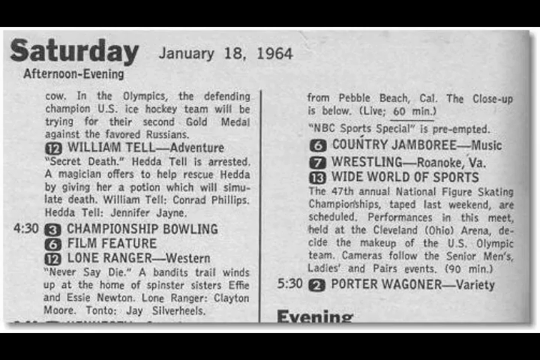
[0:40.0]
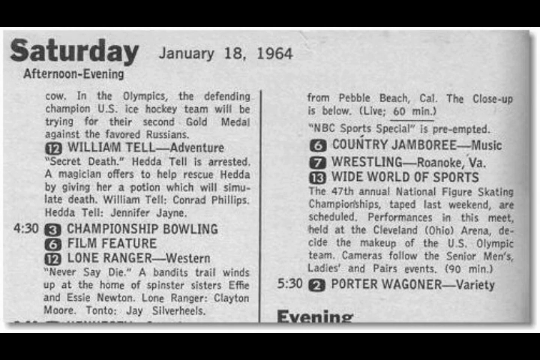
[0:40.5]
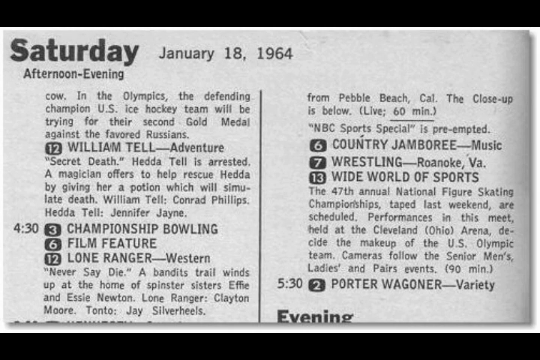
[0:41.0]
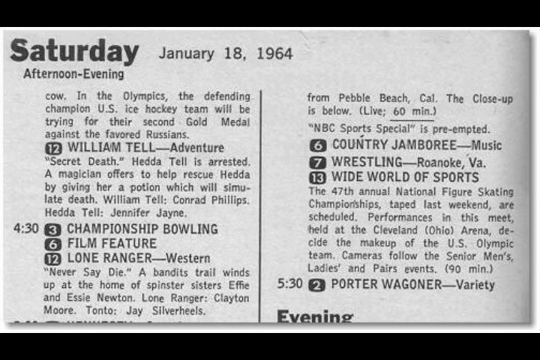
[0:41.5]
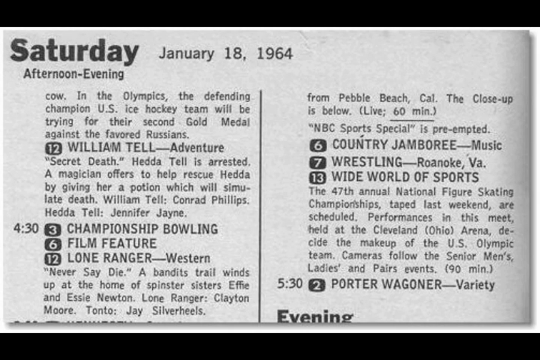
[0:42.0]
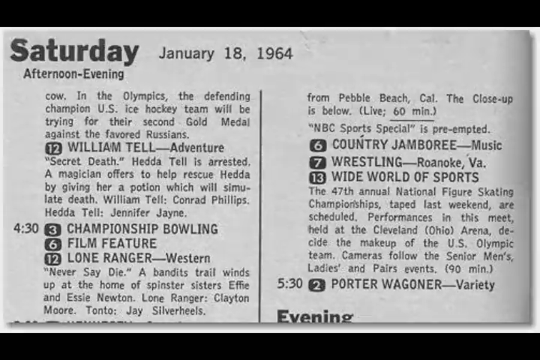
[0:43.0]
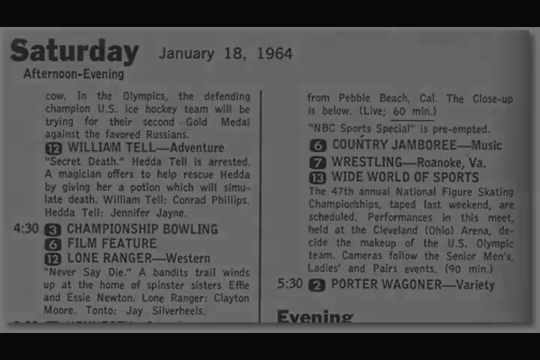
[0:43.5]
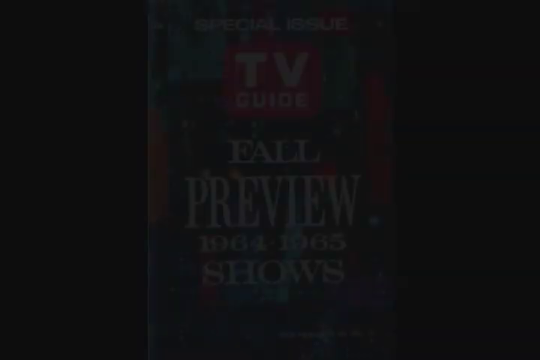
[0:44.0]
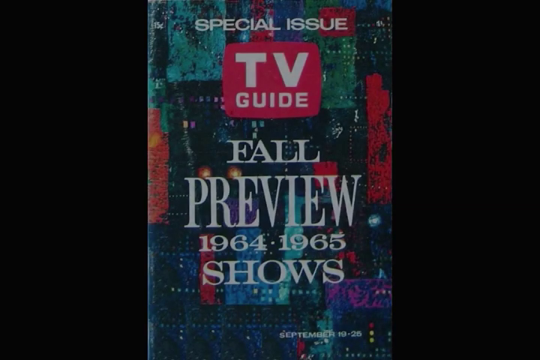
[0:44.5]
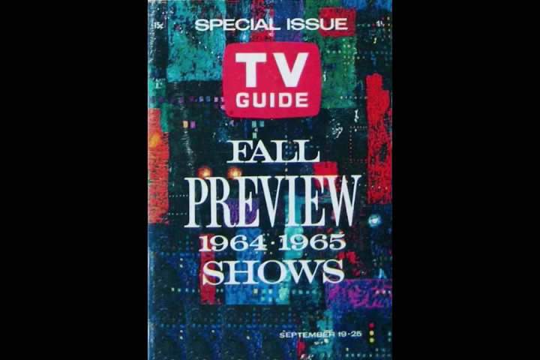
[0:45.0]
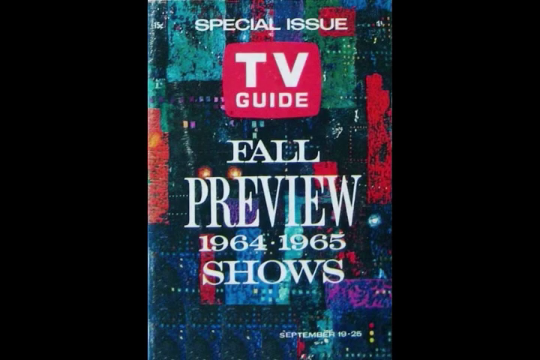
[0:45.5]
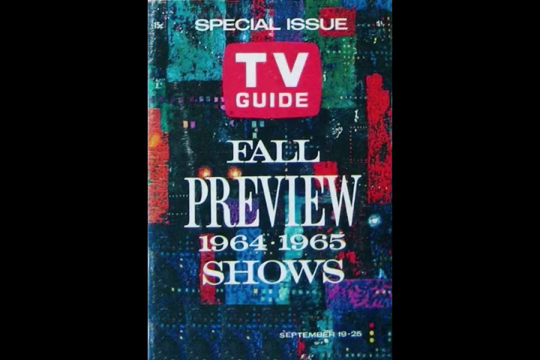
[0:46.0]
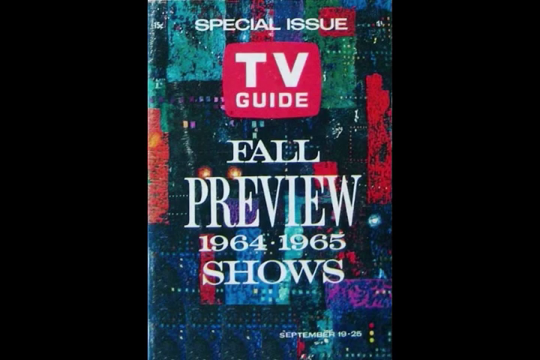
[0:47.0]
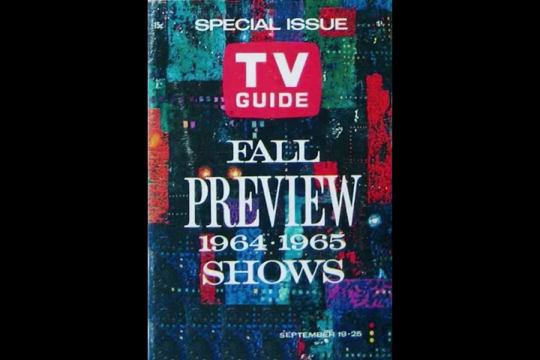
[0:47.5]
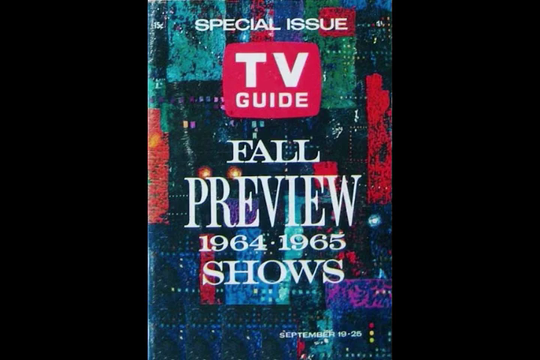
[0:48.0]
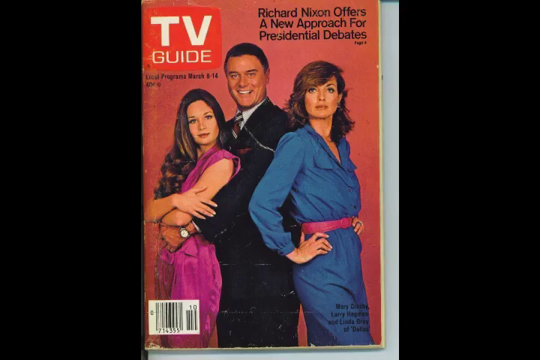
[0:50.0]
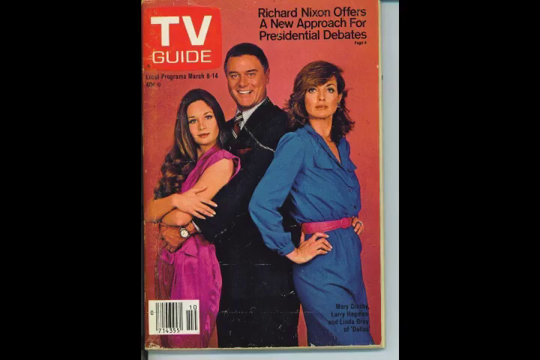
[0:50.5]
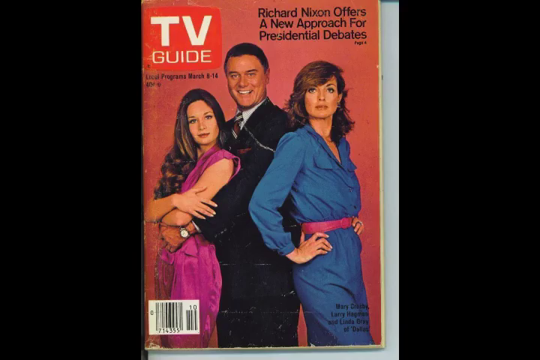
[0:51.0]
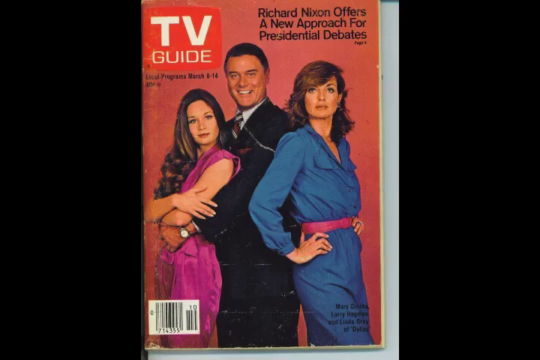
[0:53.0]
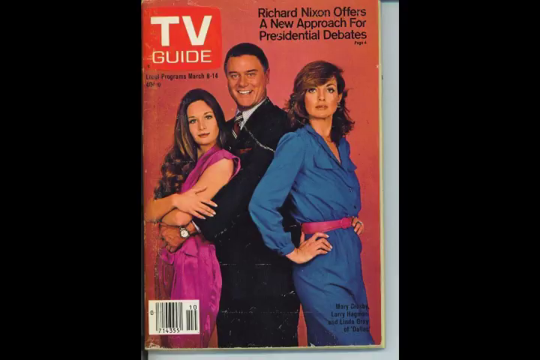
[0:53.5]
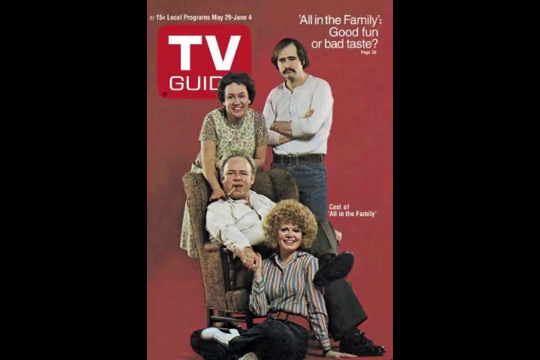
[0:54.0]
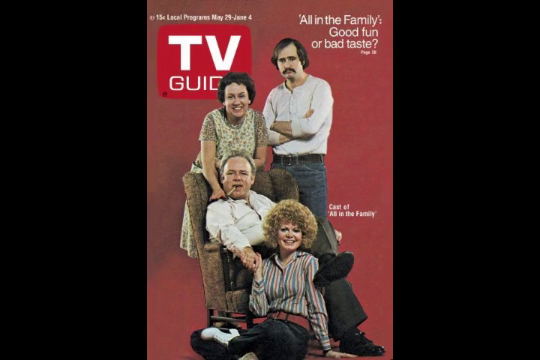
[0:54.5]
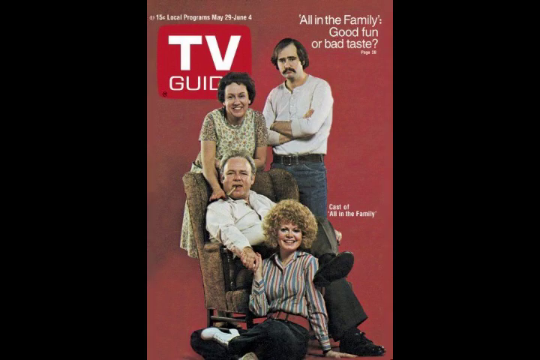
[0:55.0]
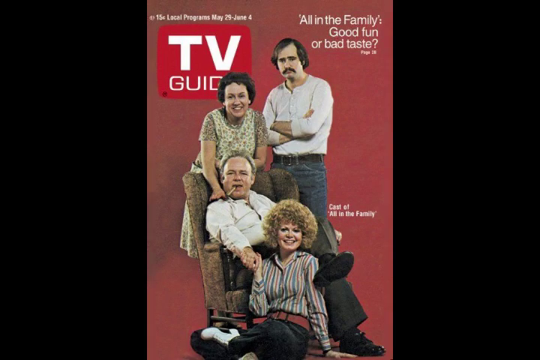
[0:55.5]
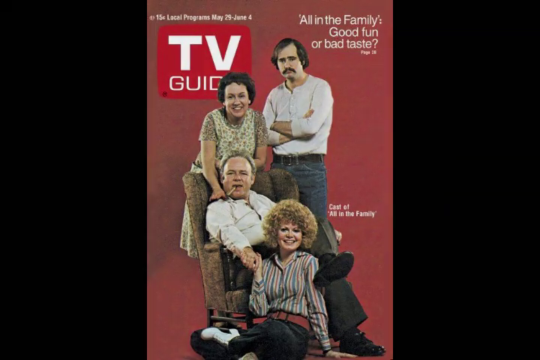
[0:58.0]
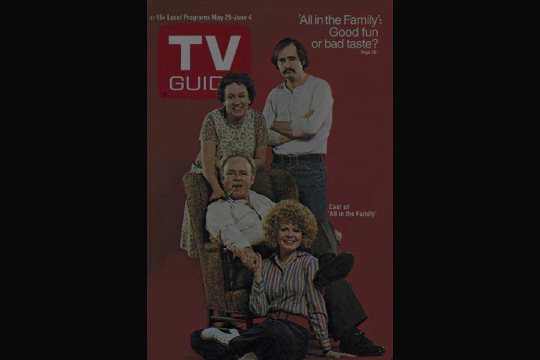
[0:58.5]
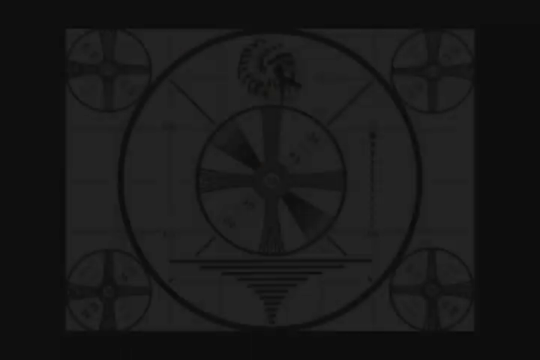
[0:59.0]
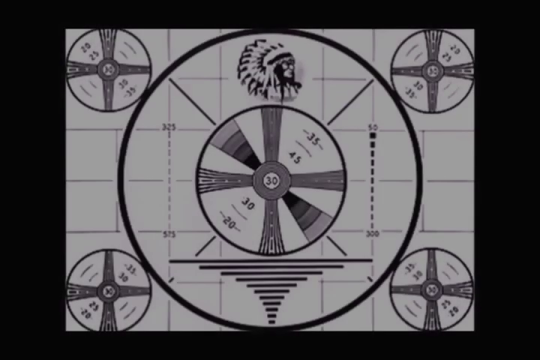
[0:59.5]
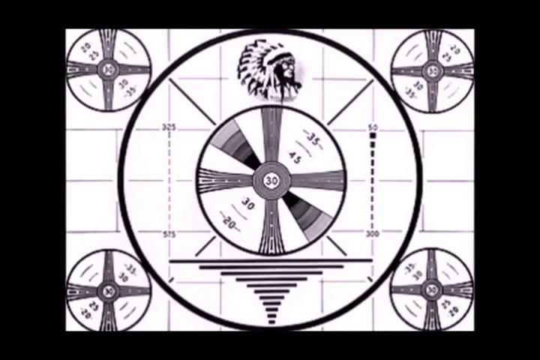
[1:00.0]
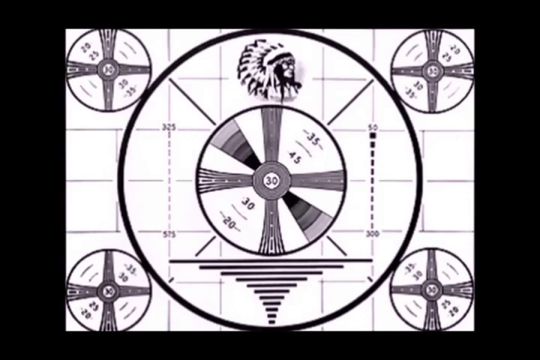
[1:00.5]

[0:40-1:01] A magazine front cover shows the text "special issue" in white, then the TV guide icon, written in white on a red square background shaped like a TV. Below the icon, "full preview, 1964 to 1965 show" is written in white on a black background. Another TV guide front cover shows a smiling man in a black suit with a white shirt and tie standing between two women. He wears a wristwatch and is hugging a woman with dark brown hair in a pink top. The other woman has dark hair and wears a dark blue top with a pink belt around her waist. Text in the top right-hand corner says "Richard Nixon offers a new approach for presidential debate". A third TV guide cover, in red, shows a black-haired man in a white shirt tucked into jeans, with a black belt and his arm tucked; he looks unhappy. Standing beside him is a smiling black-haired woman in a light brown and olive top, leaning on a seat where an old gray-haired man in a white shirt is seated with a cigarette sticking out of his mouth. His hands are extended, holding the hand of a smiling ginger-haired woman seated on the floor in a shirt with multiple stripes. The video then shows an image of circles with an Indian in the middle of them.